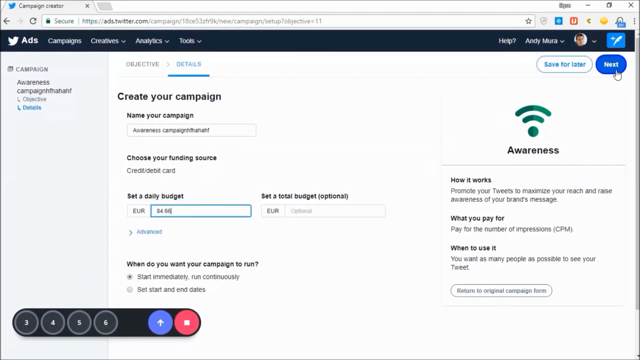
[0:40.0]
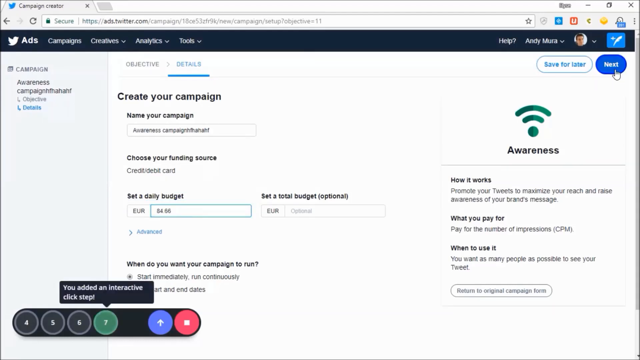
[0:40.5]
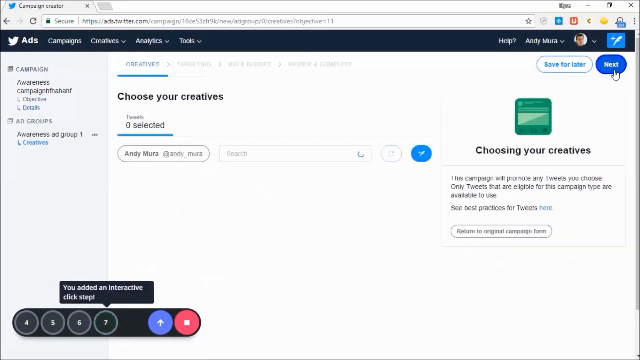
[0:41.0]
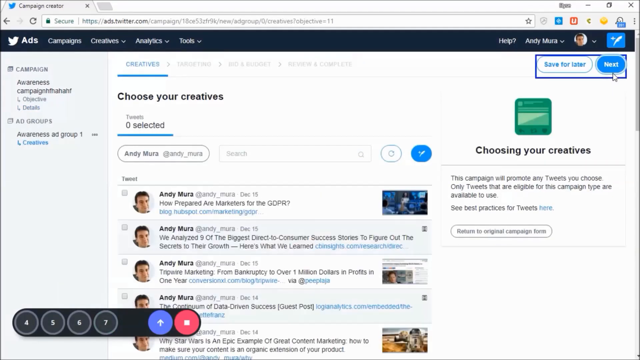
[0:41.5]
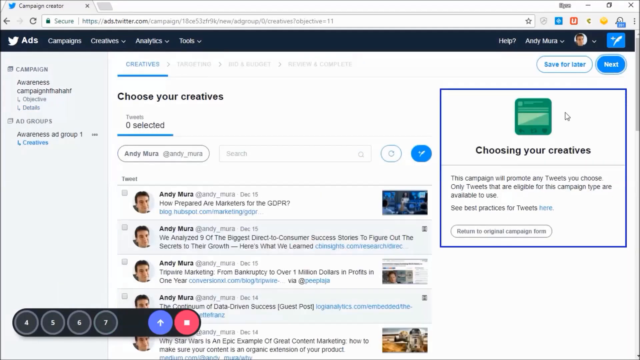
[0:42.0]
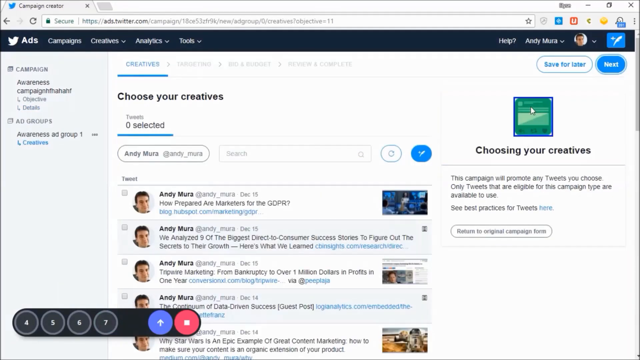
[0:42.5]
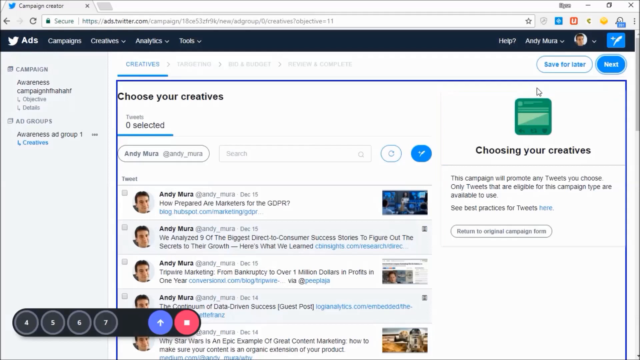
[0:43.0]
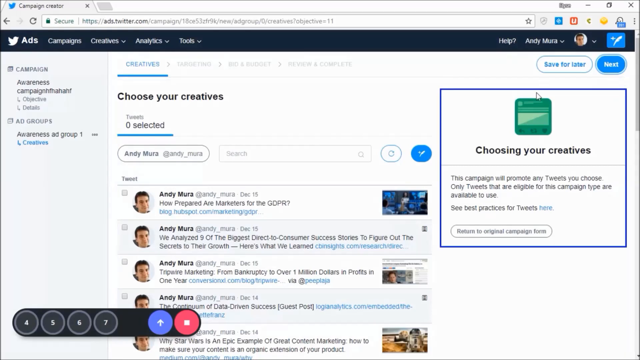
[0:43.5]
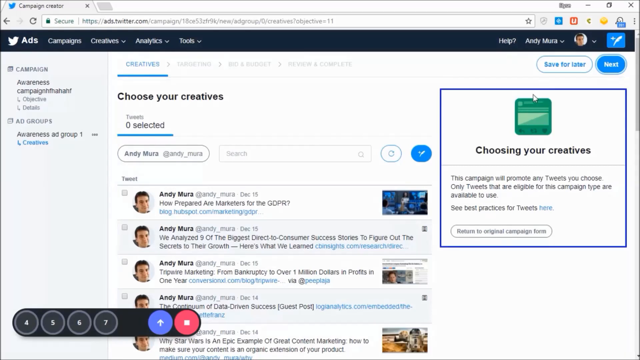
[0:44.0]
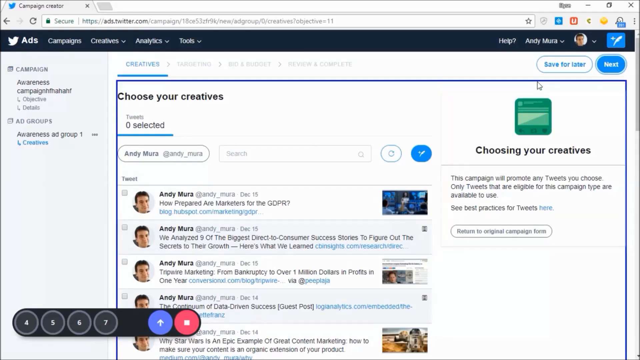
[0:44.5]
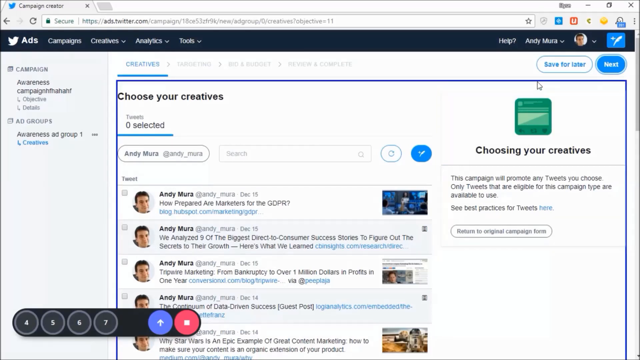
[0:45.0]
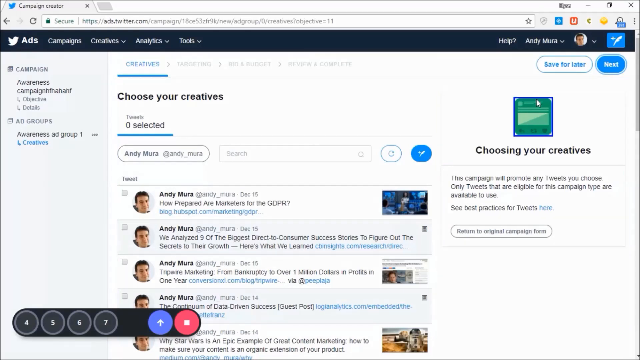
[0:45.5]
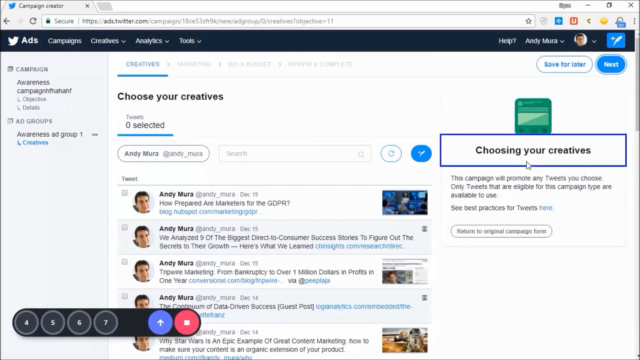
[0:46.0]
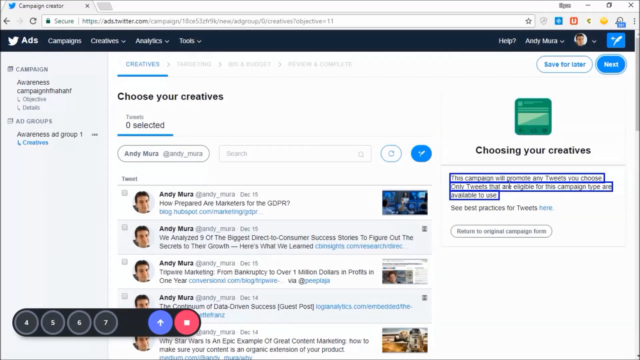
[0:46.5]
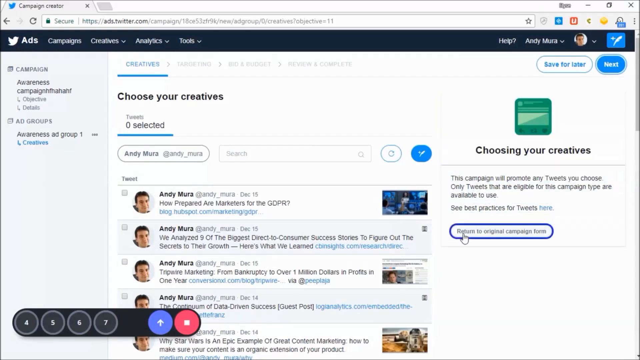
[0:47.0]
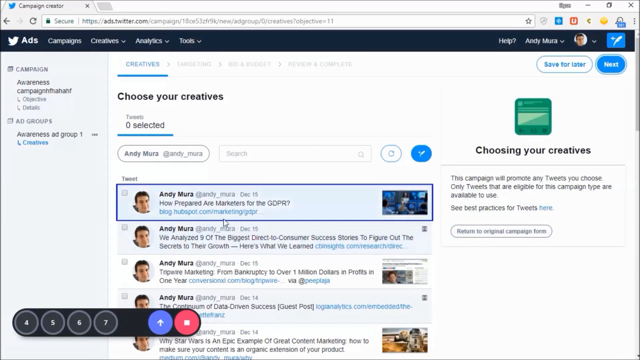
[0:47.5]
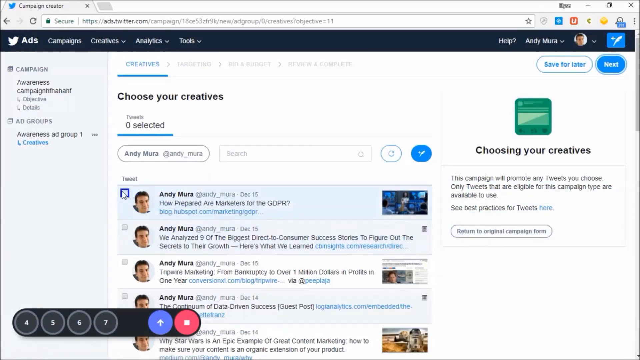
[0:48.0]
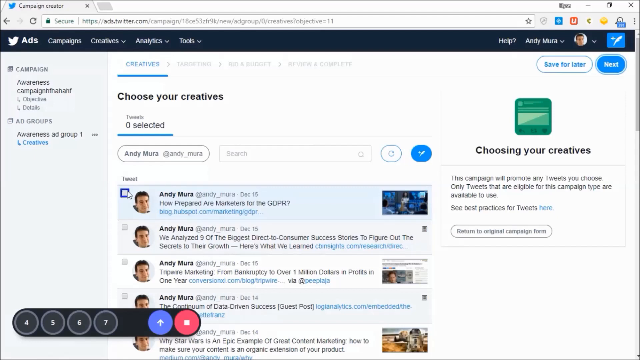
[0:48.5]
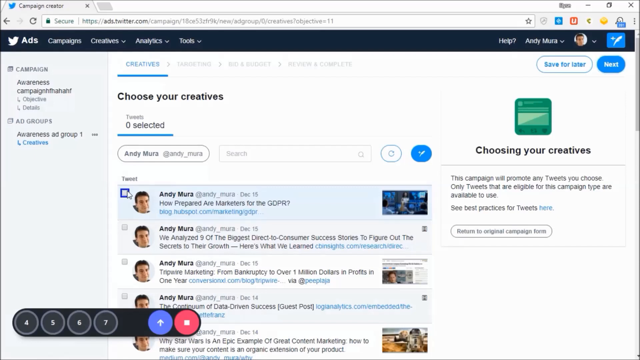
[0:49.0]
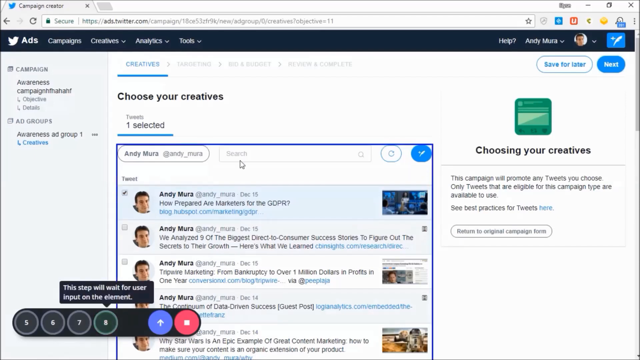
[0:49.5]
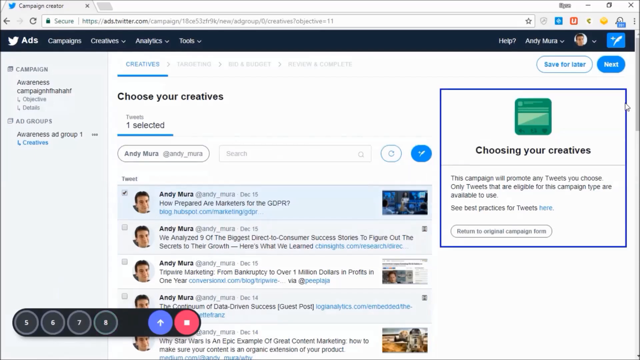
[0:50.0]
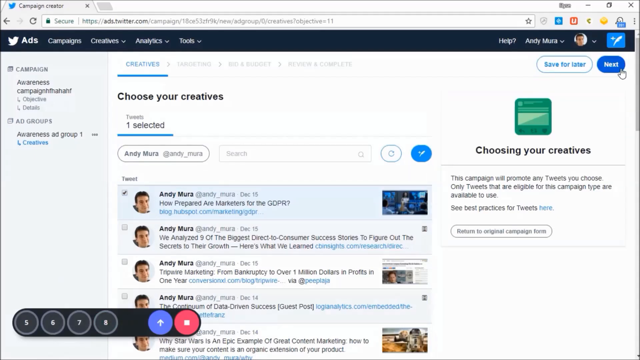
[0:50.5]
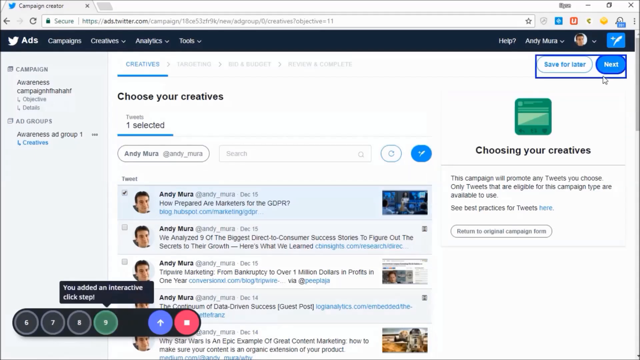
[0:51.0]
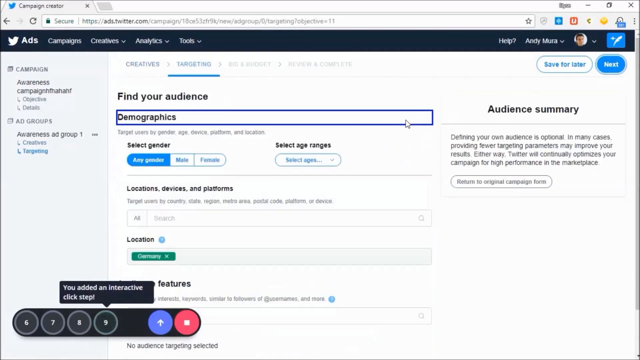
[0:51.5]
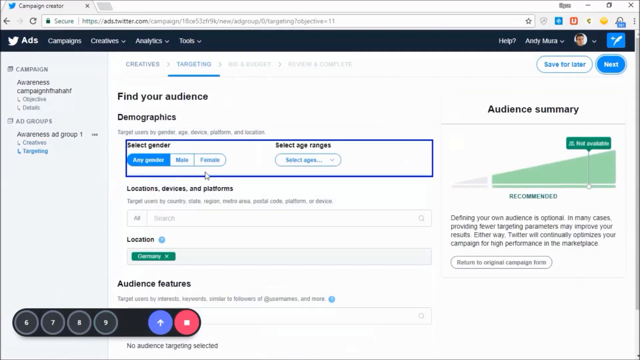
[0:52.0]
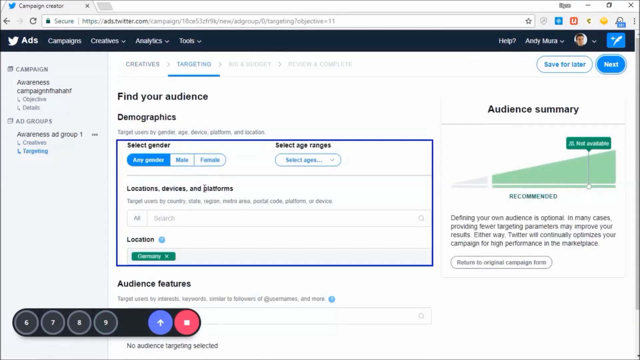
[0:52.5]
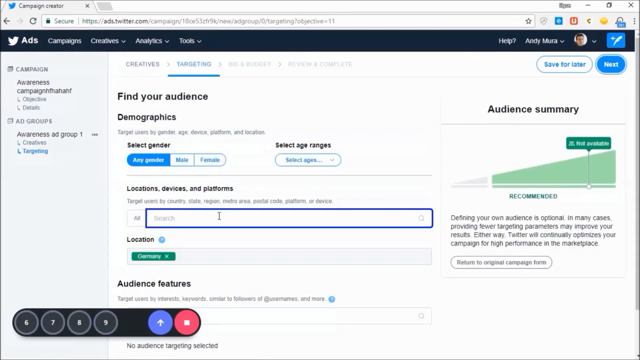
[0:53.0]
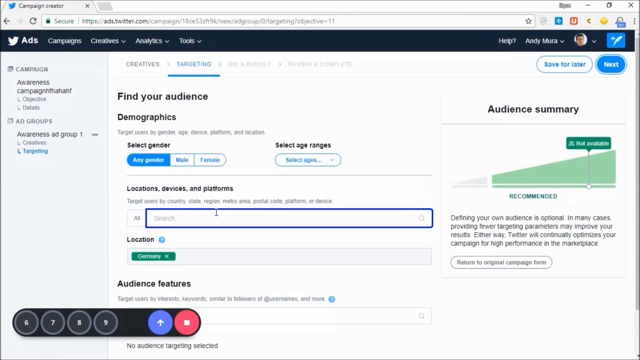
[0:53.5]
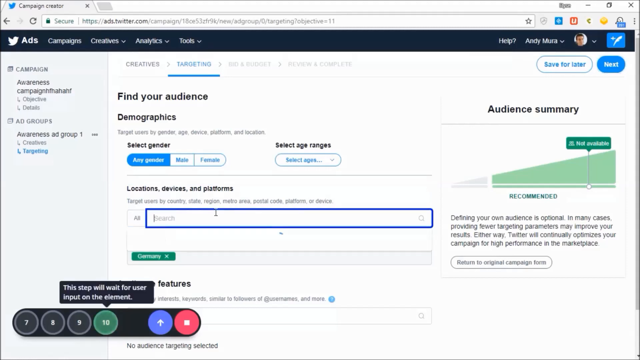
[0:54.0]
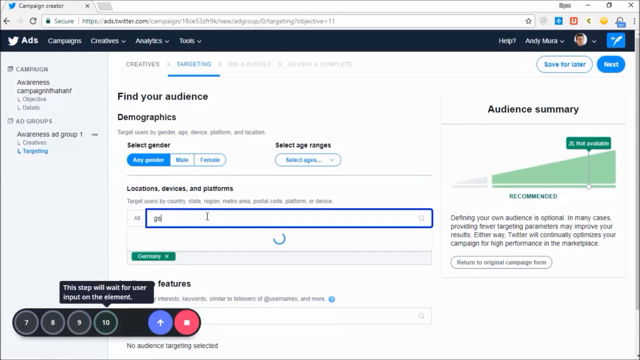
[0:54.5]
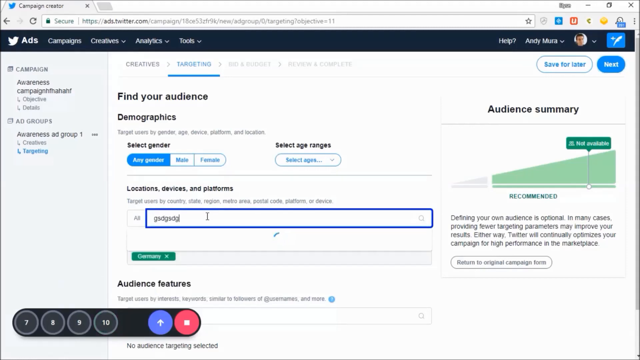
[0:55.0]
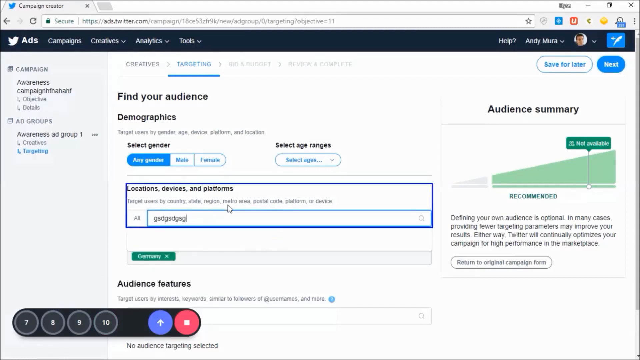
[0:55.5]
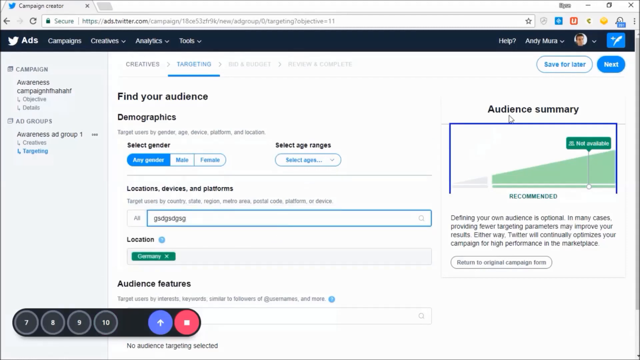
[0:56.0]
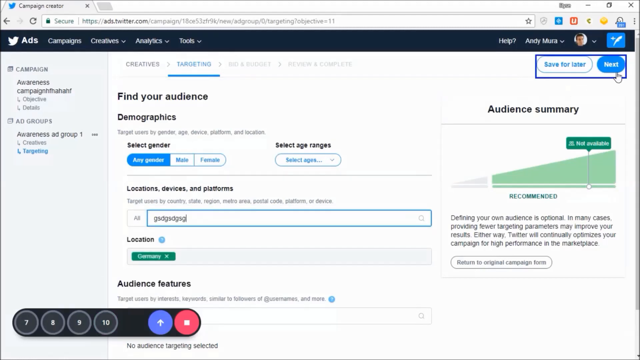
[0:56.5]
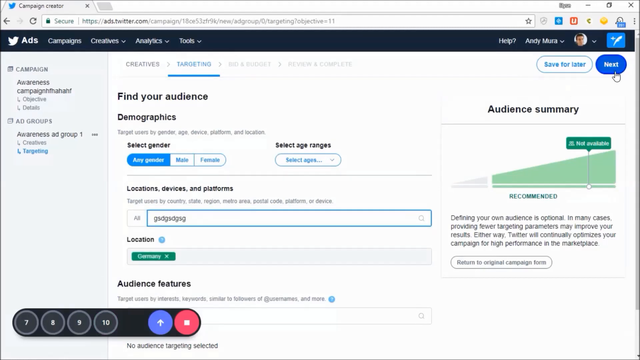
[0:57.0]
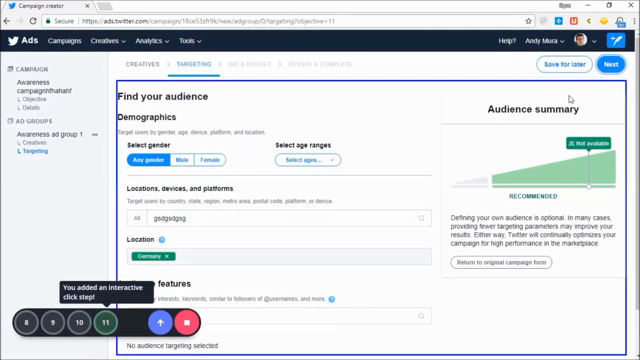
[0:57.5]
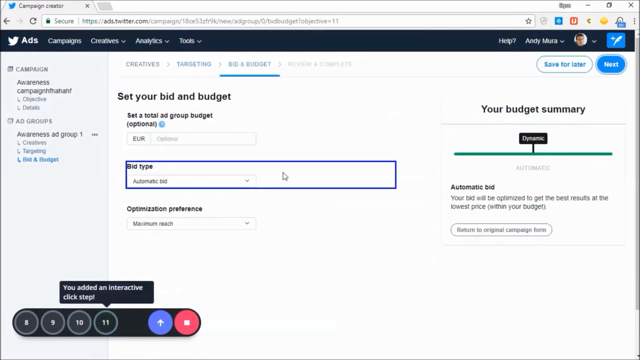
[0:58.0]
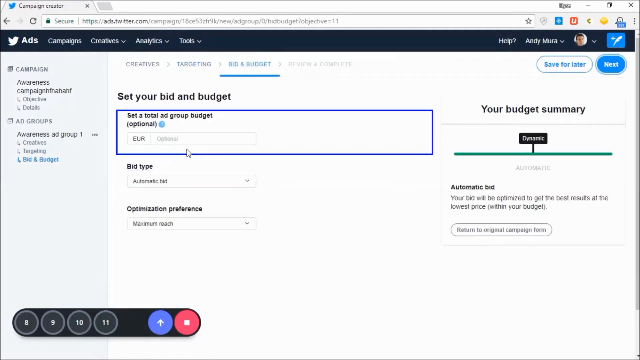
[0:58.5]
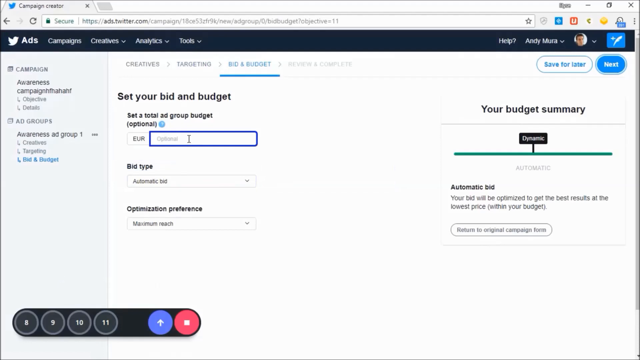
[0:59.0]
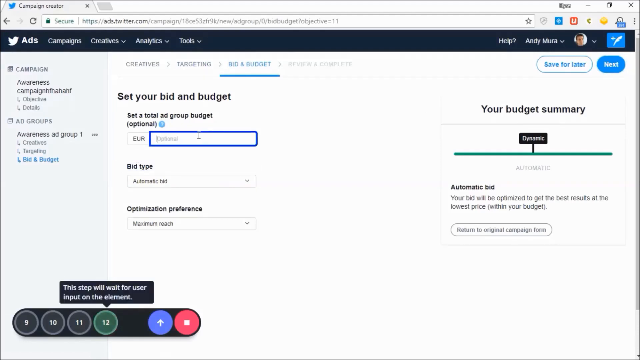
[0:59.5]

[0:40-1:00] Another section of the ads page appears: the objective details page of the campaign. It says "create your campaign", underneath that "name your campaign", and it shows "awareness" followed by some information that is hard to read. Below that it says "choose your funding source" with credit or debit card, and a daily budget can be set in euros; the amount appears to be 466 or possibly 84, and it is hard to tell whether there is a euro sign. The view moves to another page that says "choosing your creatives", with several profile pictures of the same person, Andy Mora, and what look like posts, each with a box that can be checked, probably to use it. Next comes the find your audience page, where demographics are displayed, and each area the person moves over is outlined with a blue highlight.